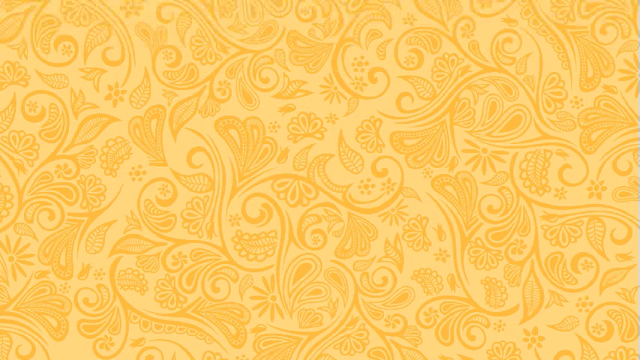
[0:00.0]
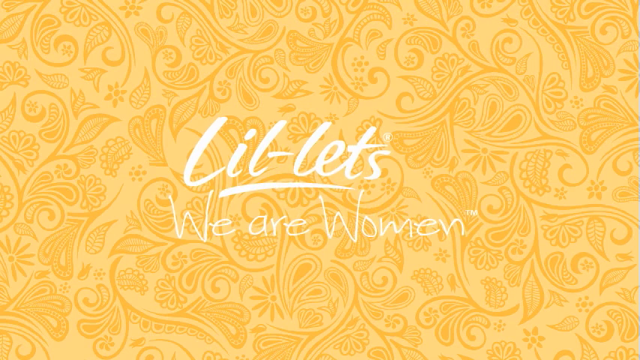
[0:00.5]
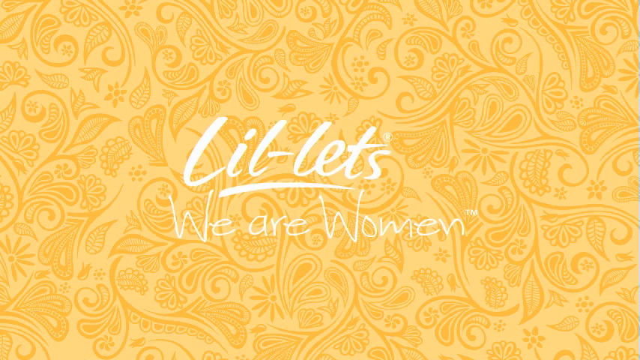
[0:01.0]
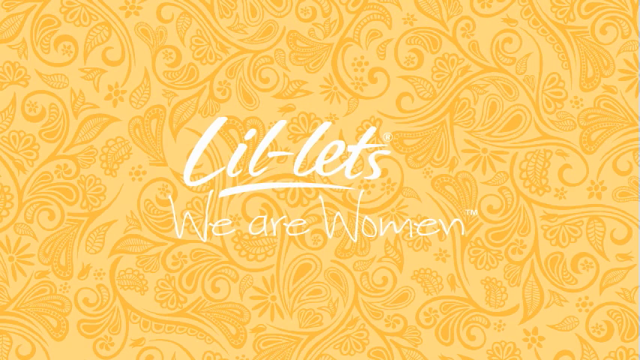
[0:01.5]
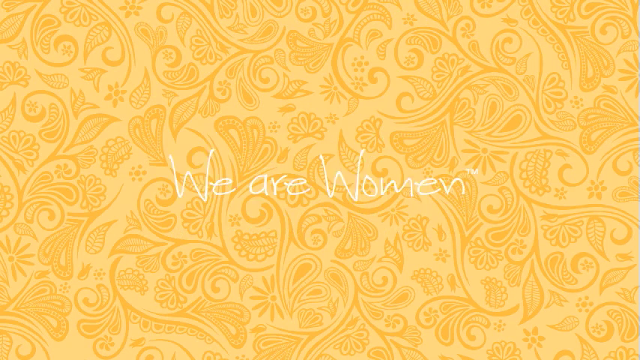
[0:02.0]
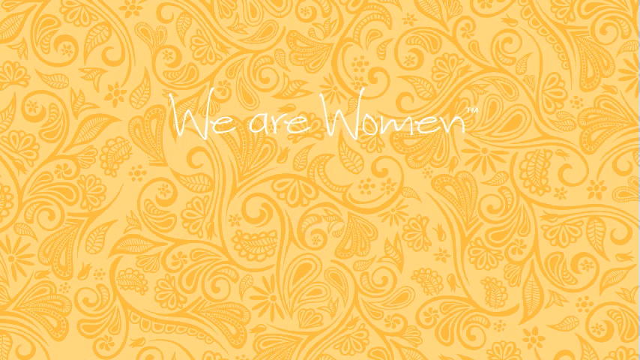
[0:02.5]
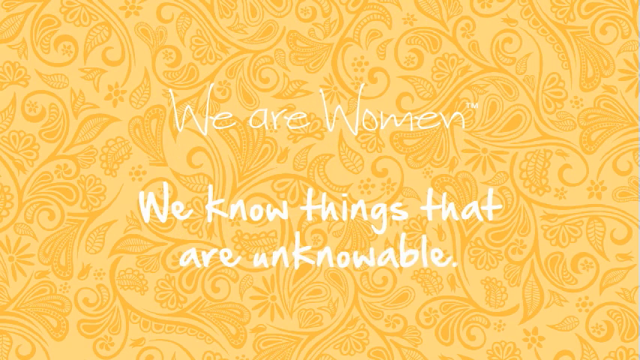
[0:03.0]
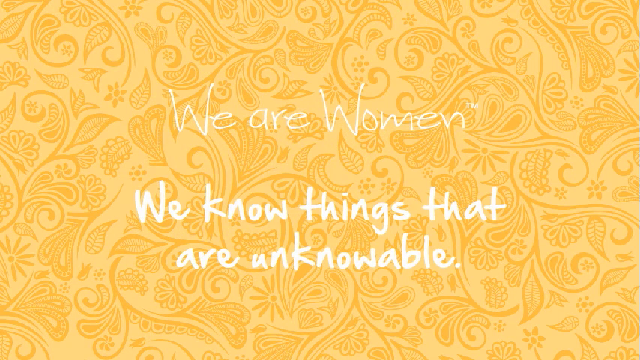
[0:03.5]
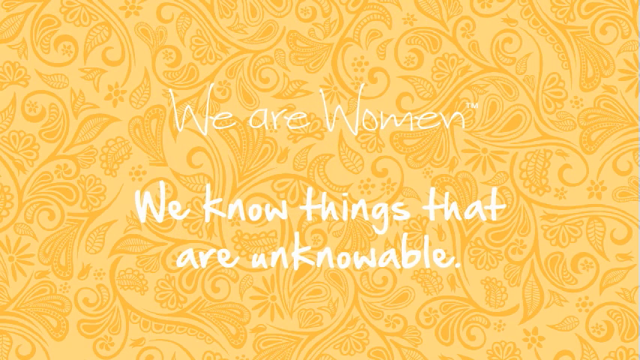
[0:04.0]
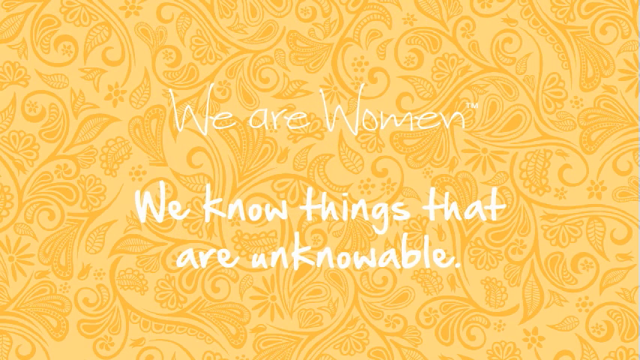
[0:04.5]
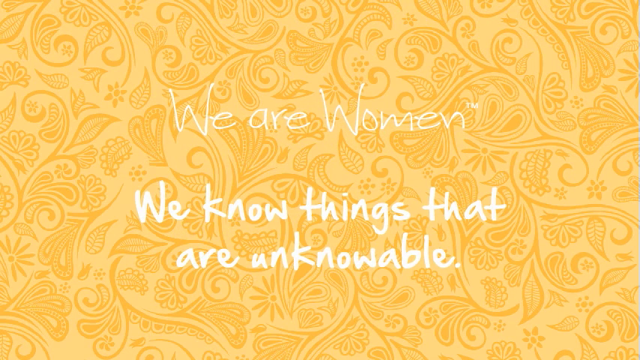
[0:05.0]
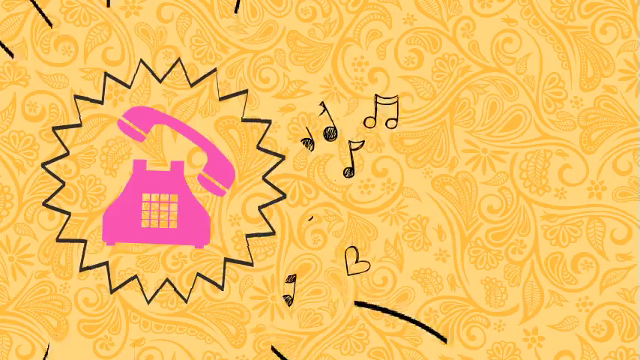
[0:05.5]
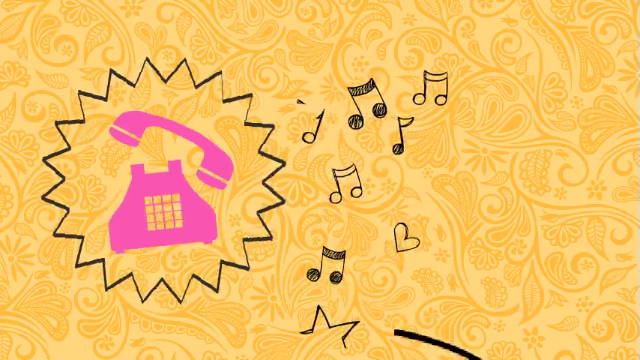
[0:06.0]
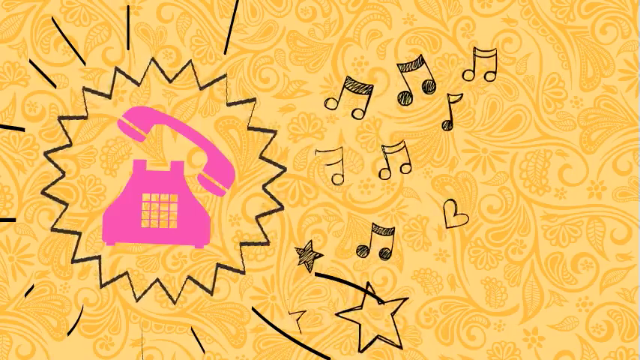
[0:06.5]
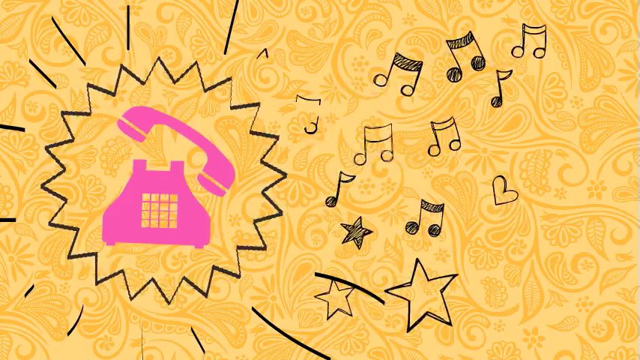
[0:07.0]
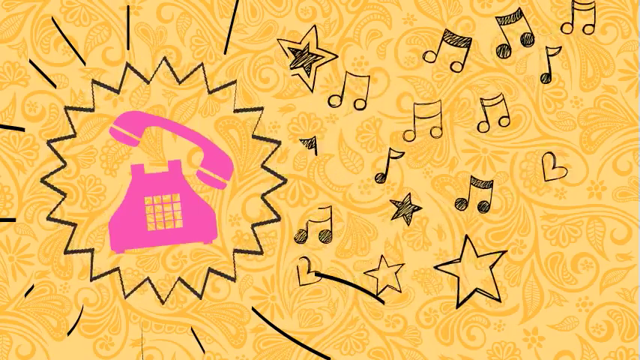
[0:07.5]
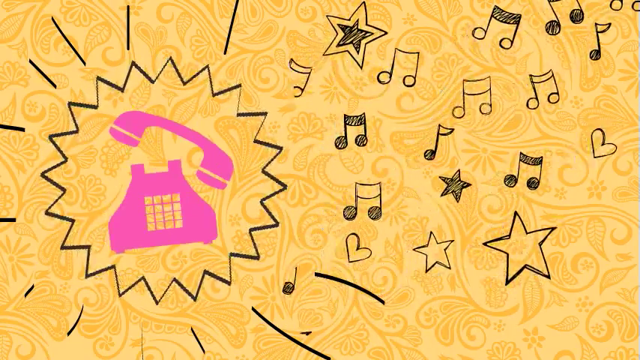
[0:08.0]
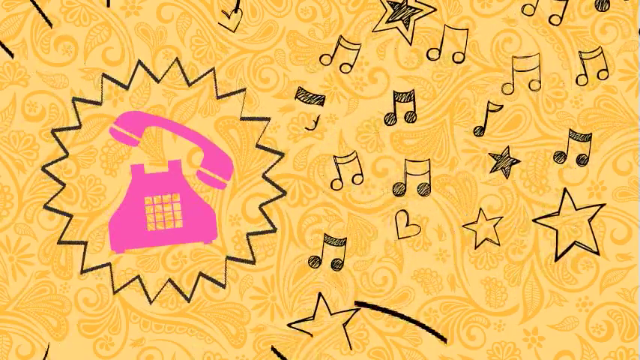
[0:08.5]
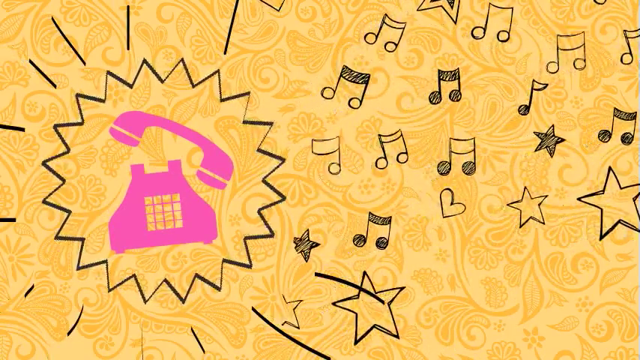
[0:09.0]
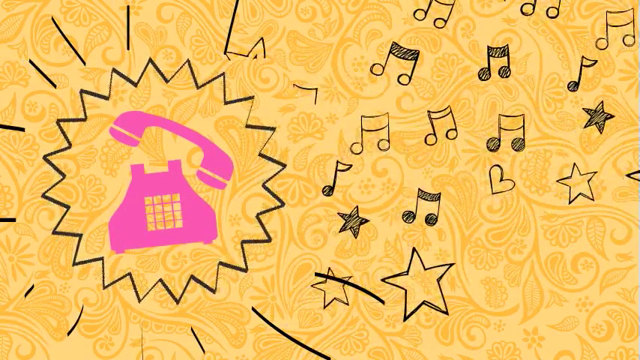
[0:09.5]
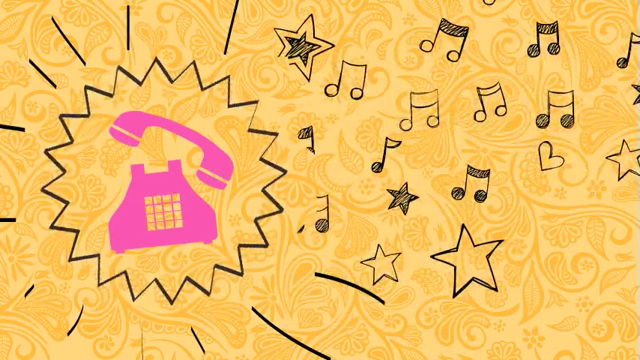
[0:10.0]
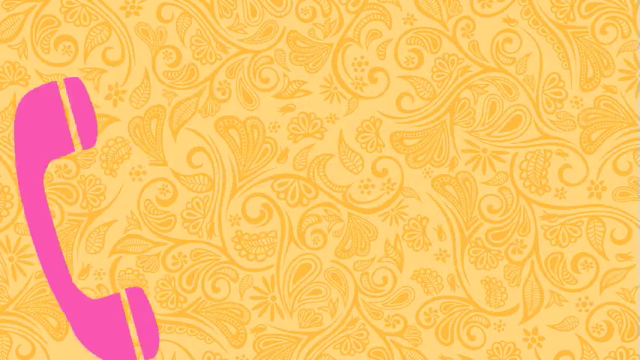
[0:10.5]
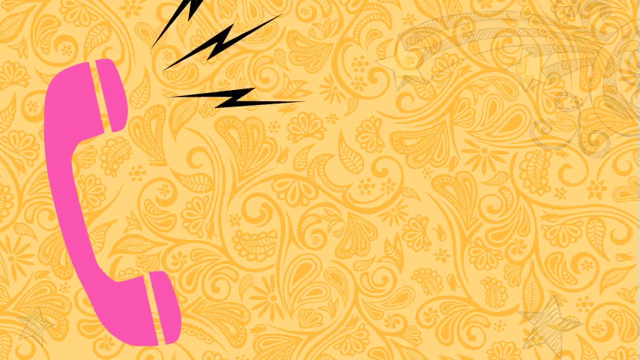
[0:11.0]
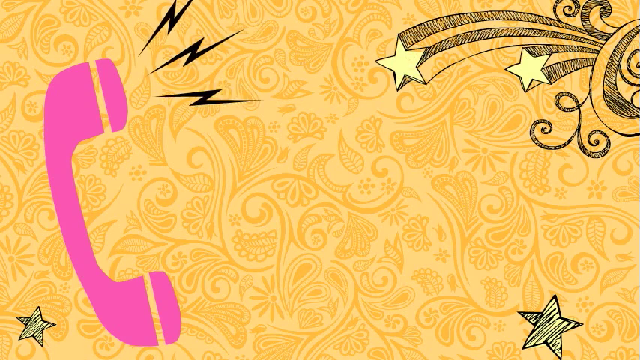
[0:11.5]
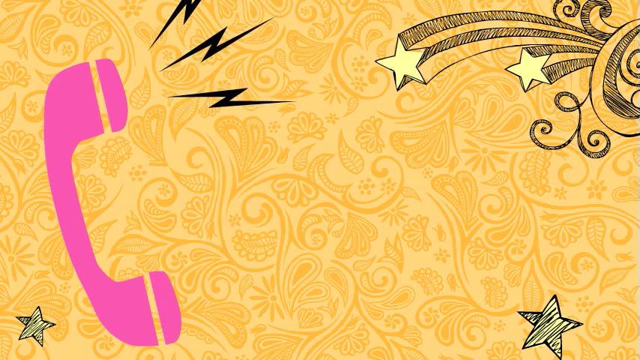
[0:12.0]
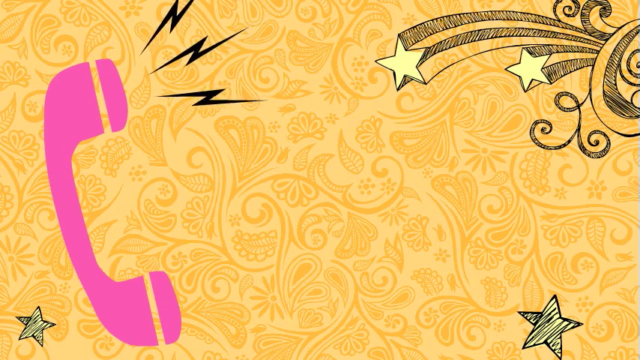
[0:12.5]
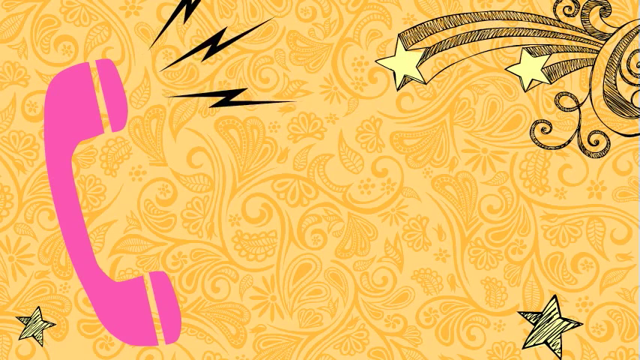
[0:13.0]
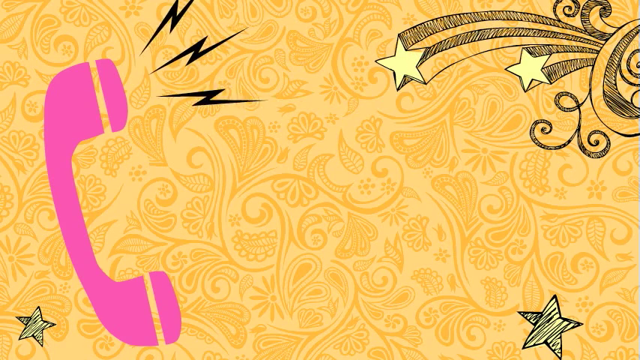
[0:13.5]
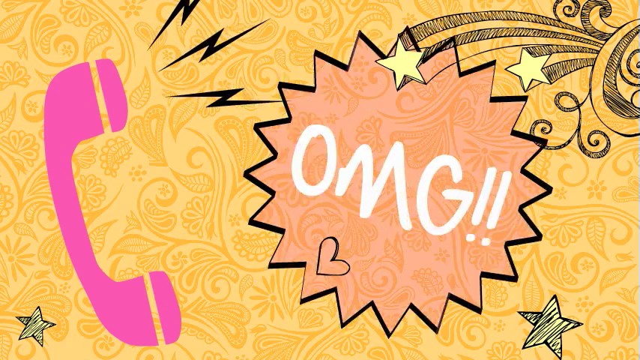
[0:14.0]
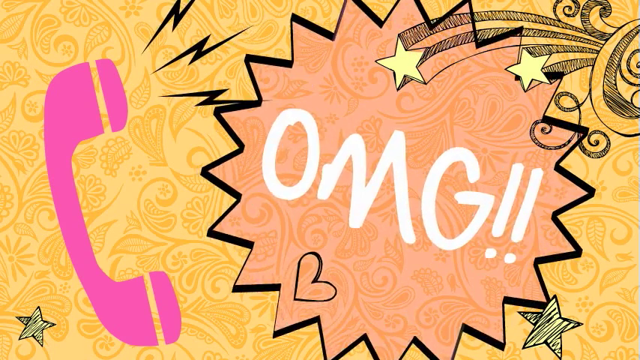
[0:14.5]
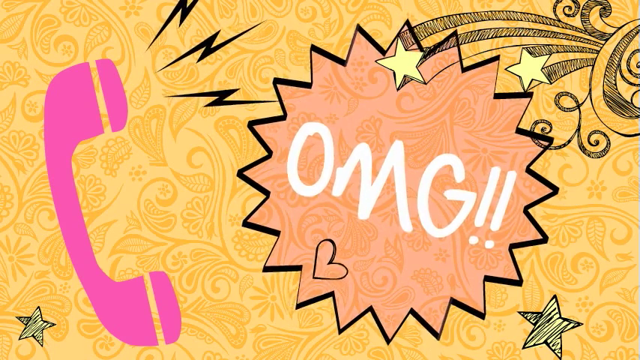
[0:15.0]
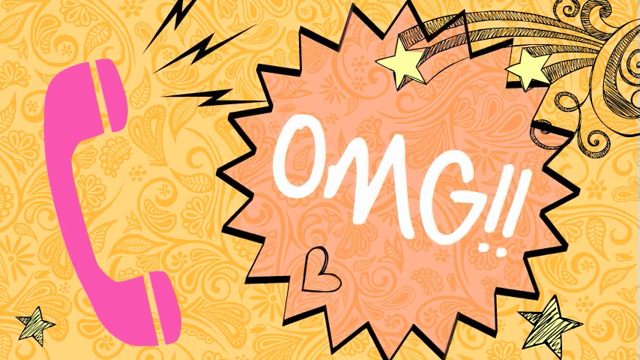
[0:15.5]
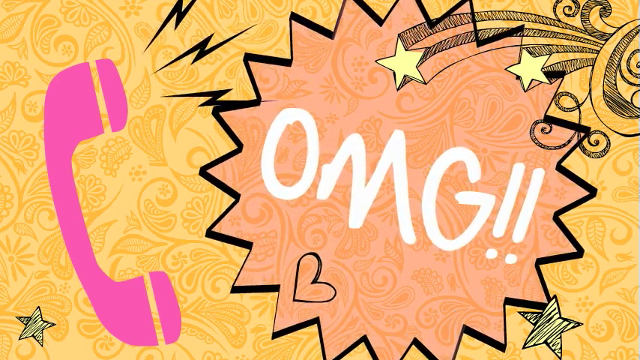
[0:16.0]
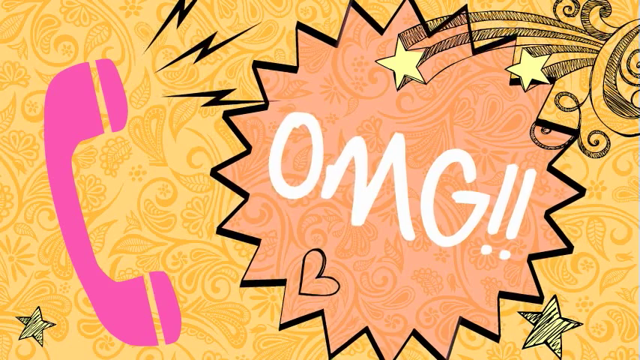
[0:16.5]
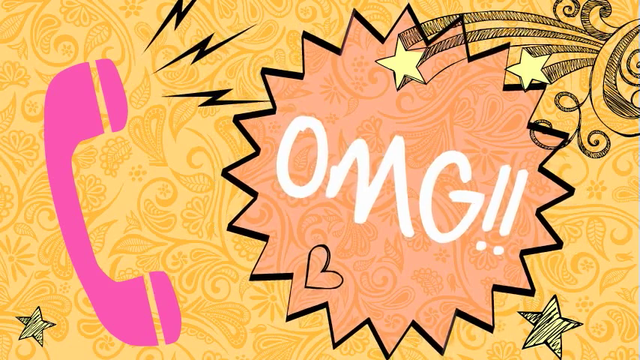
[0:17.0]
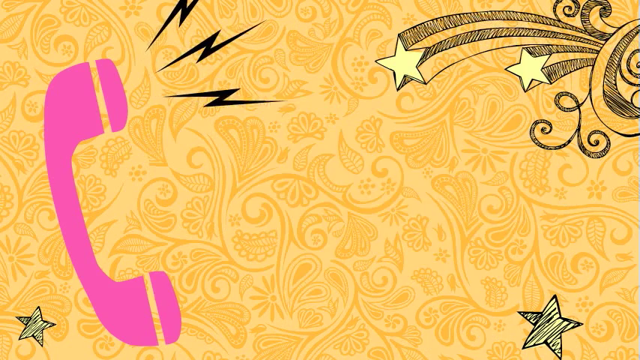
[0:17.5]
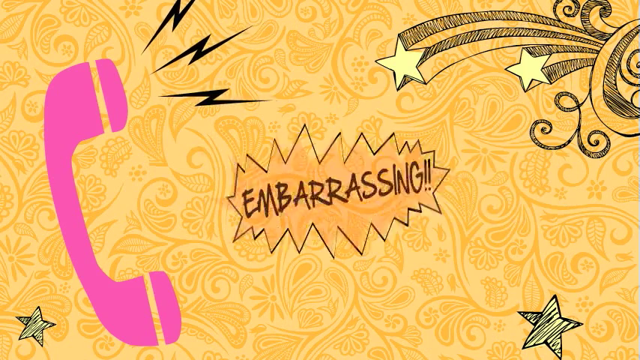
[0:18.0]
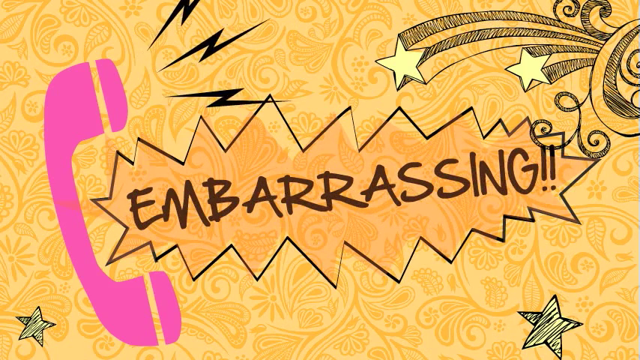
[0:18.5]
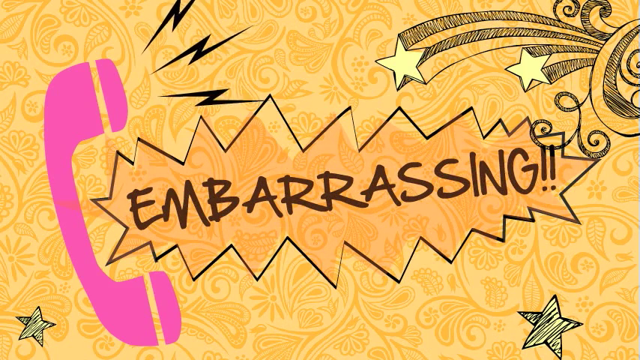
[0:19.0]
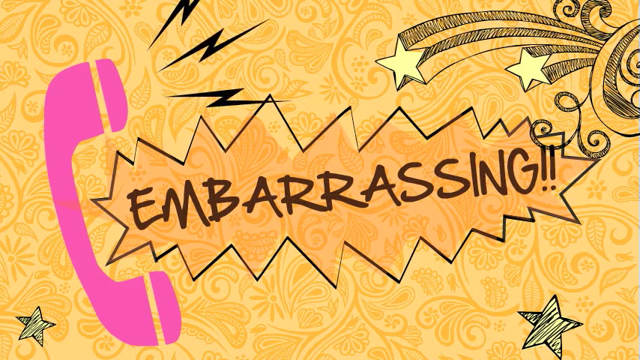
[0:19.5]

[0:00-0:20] The video opens on a light yellow screen with darker yellow patterns running through it, forming floral patterns of leaves, vines and flowers. The letters "LIL-LETS" appear with "we are women" underneath, all in white. Then the words "we know things that are unknowable" appear, also in white. Next, a pink phone appears, its receiver sort of off the base, with yellow keypads that have no numbers on them. The phone is surrounded by a spiky circle, not exactly a circle but a bunch of spikes forming one, and musical notes, stars and hearts come out of it. Then the phone's receiver is shown on the left side of the screen with black lightning bolts coming out of it, while five-pointed stars are on the right side. Another spiky circle appears with the letters "OMG!!" inside it in white. Then a long spiky shape appears with the word "embarrassing" inside it in black.